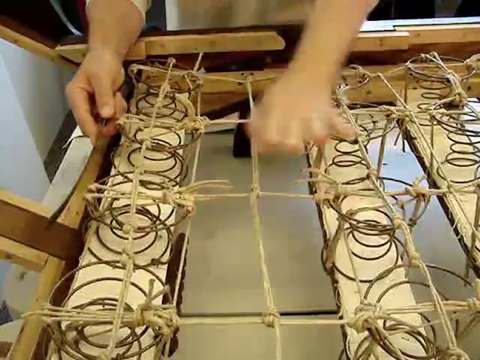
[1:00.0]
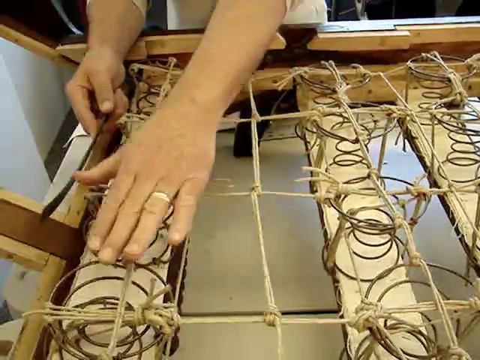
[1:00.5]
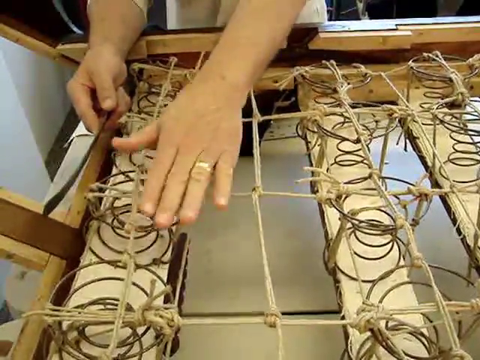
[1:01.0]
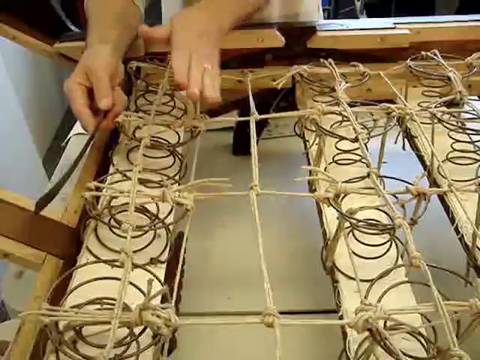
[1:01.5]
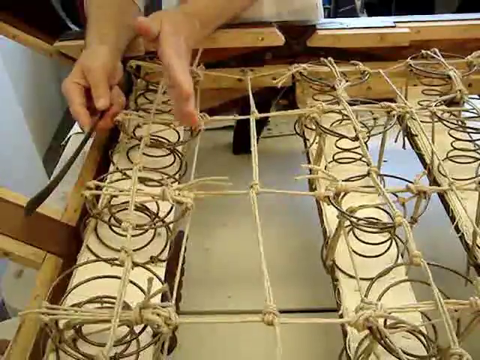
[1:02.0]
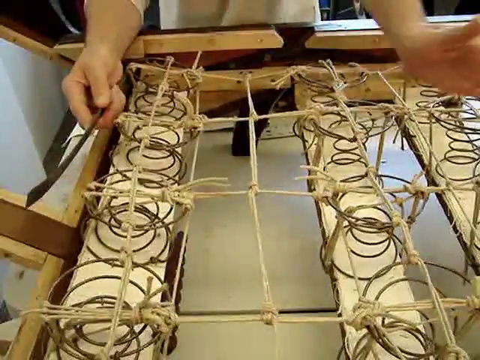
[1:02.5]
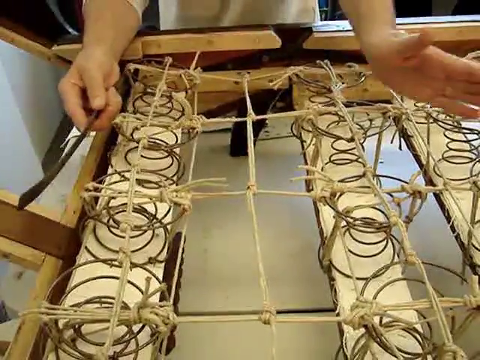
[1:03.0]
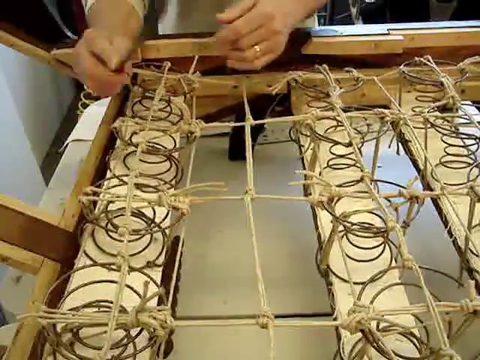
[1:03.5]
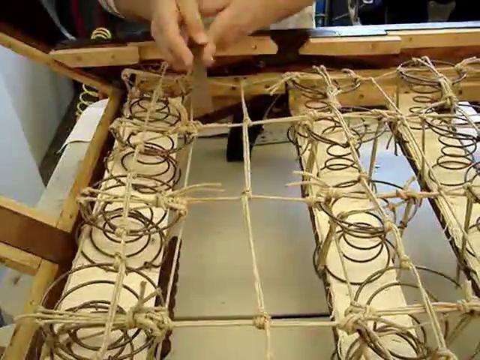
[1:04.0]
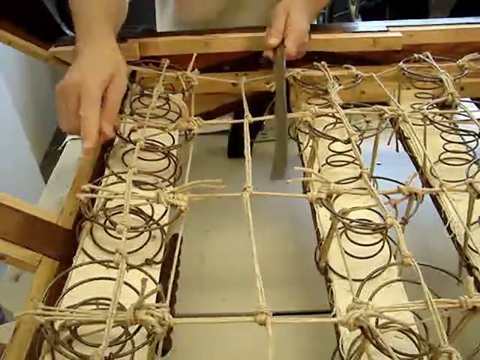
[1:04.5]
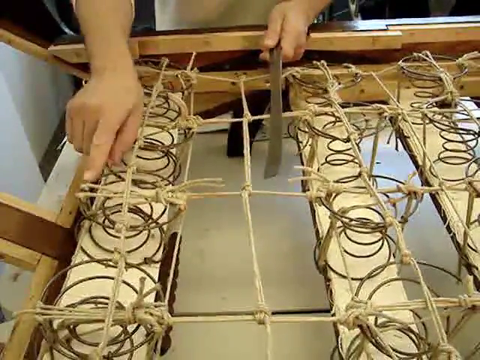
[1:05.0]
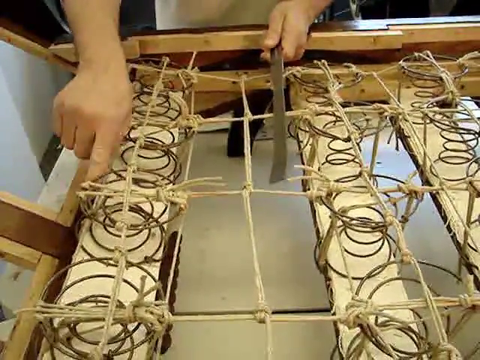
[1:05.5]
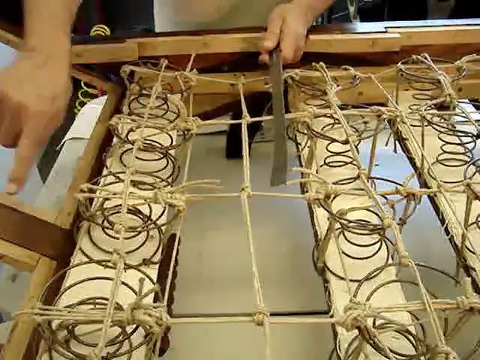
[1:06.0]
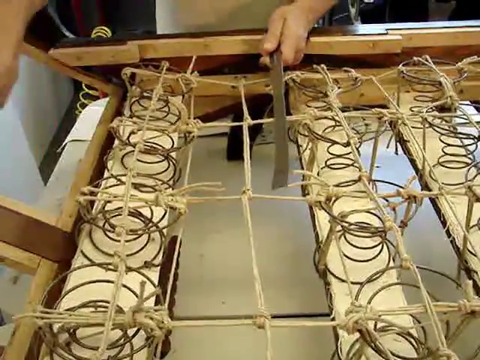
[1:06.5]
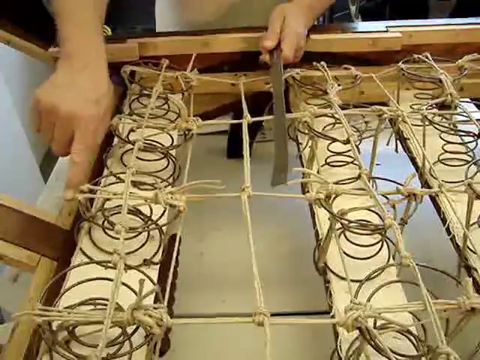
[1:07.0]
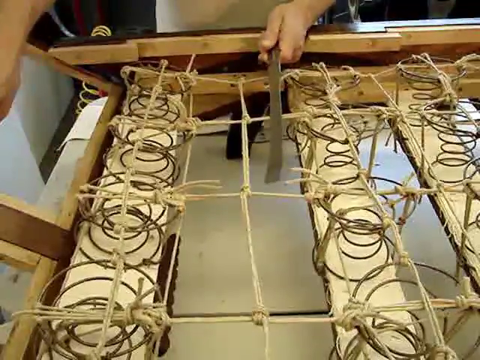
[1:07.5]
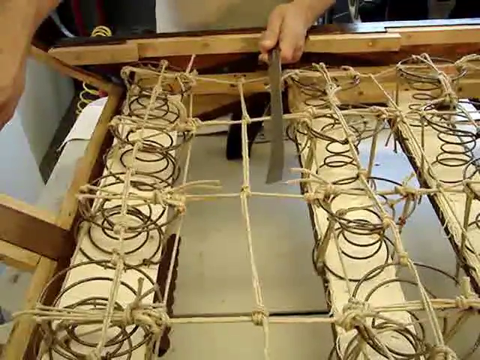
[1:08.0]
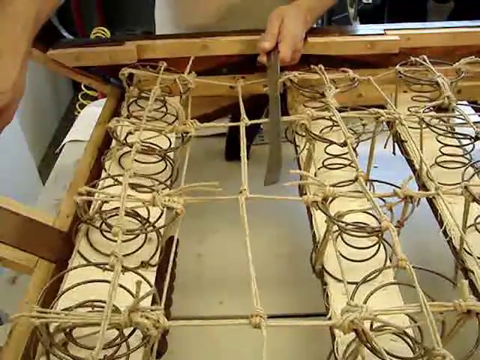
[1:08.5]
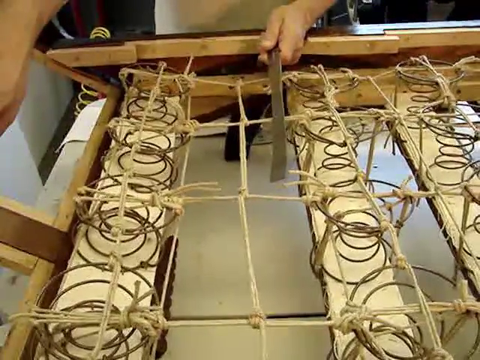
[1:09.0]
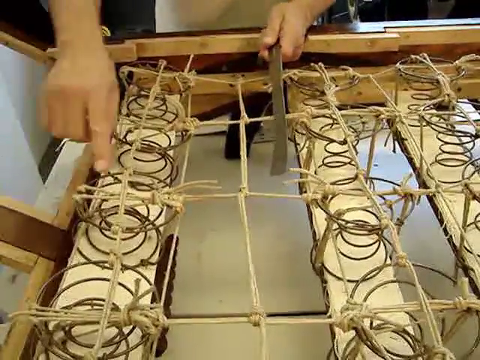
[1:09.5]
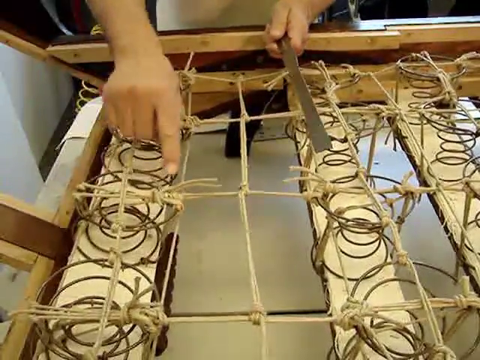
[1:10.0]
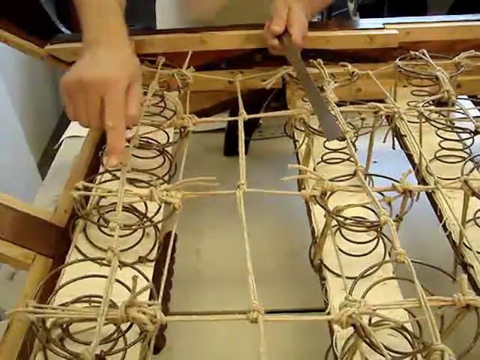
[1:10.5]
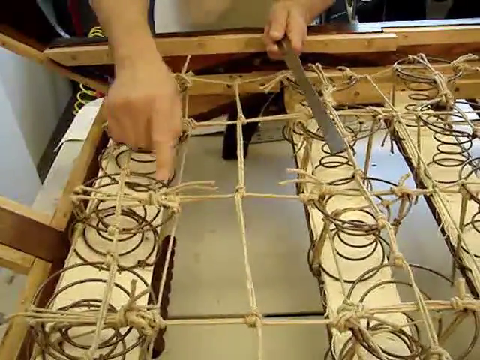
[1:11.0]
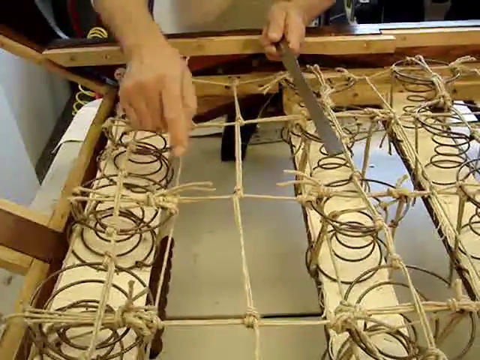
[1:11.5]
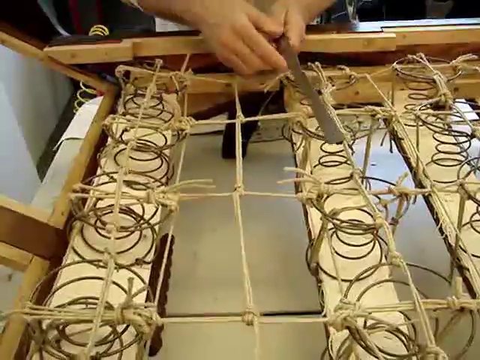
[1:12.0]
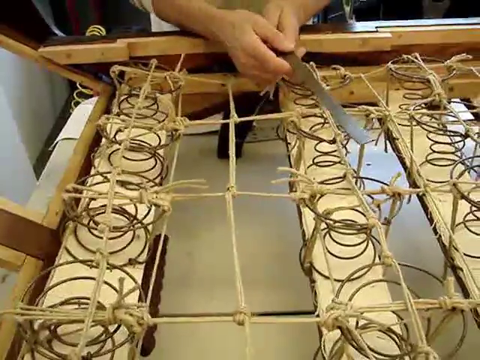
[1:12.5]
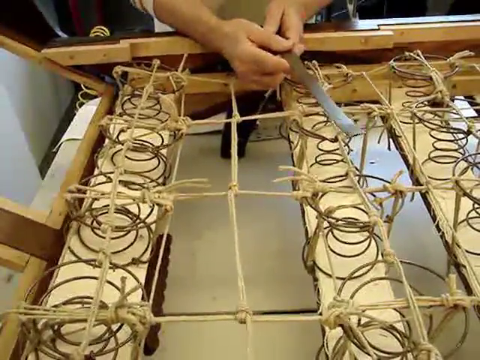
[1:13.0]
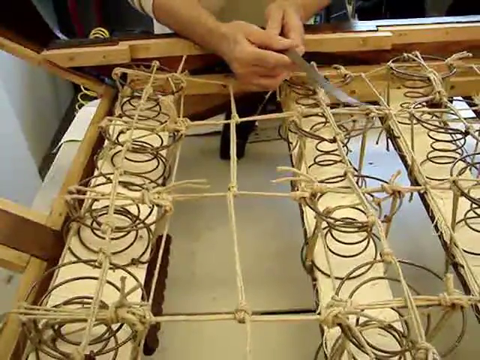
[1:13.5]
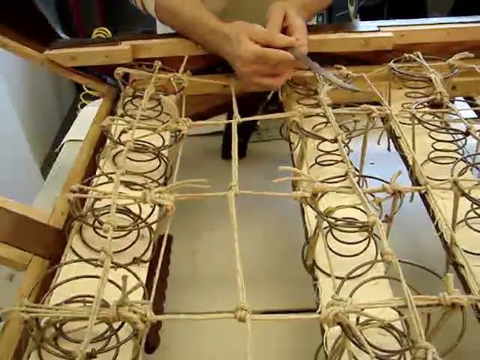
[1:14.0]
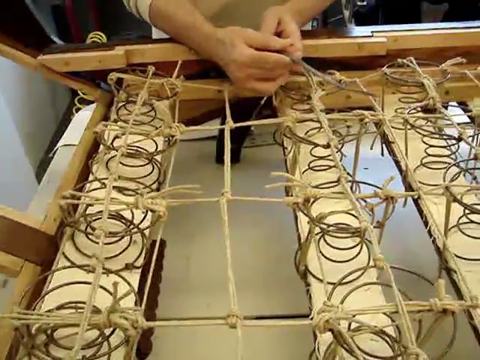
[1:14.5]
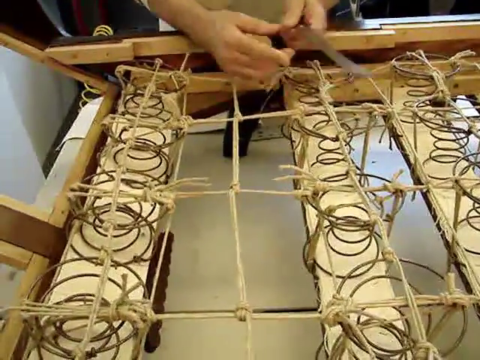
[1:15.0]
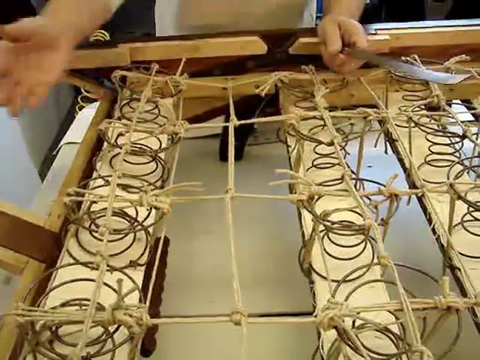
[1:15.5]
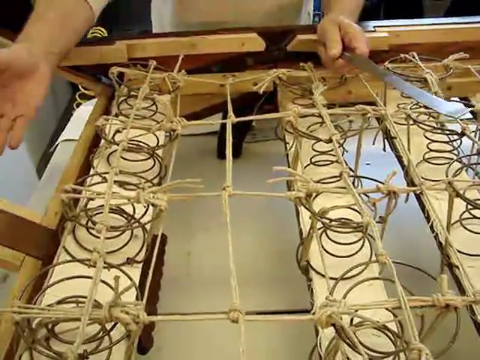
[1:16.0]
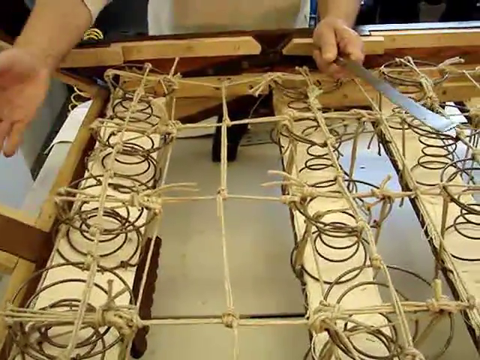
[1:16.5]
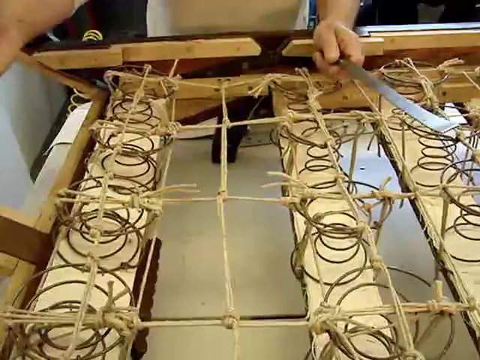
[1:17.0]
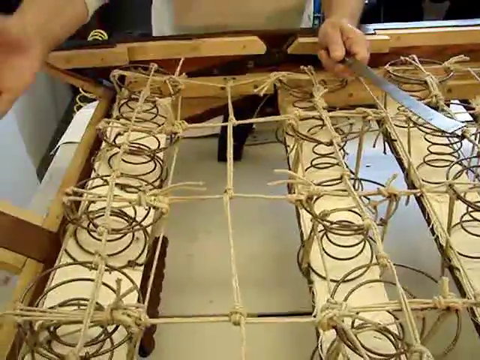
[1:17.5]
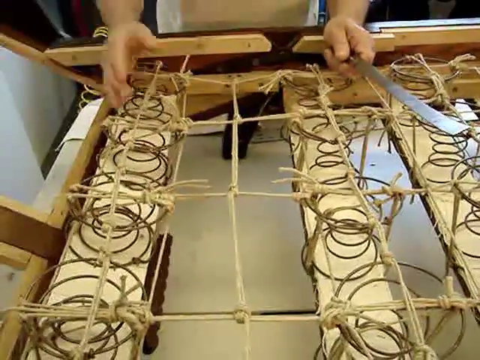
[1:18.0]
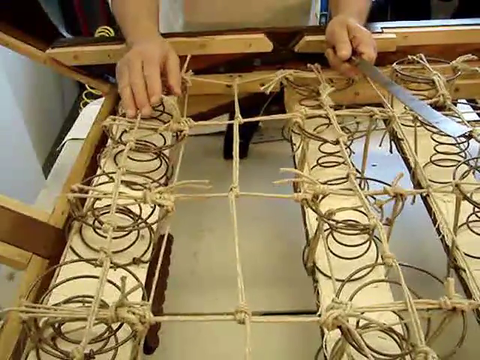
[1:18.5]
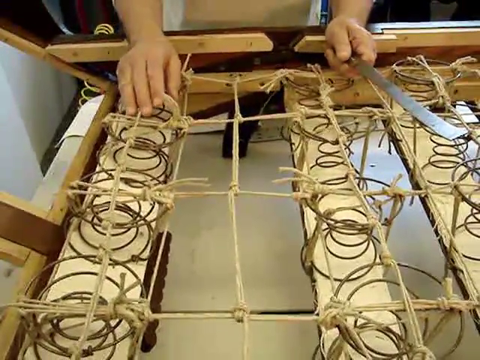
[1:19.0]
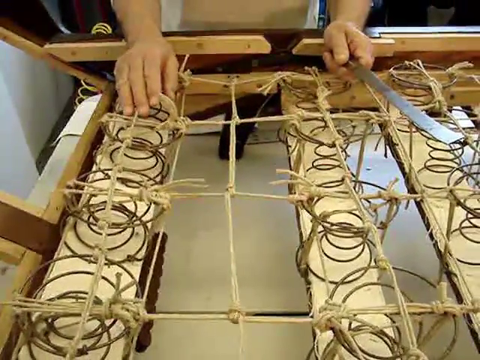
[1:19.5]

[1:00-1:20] A wooden structure is in front in the workshop. The man shows the springs on top and how tight they are, holding on top of the structure. The wood is lying down, with springs on top and something tied on top of those. He demonstrates how strong the springs are.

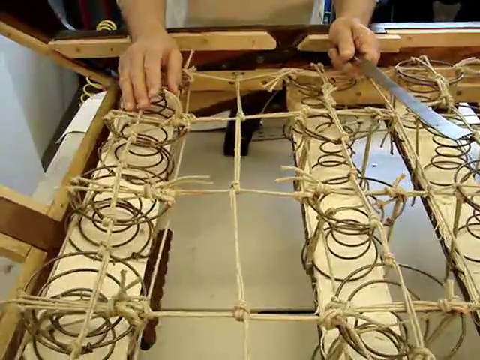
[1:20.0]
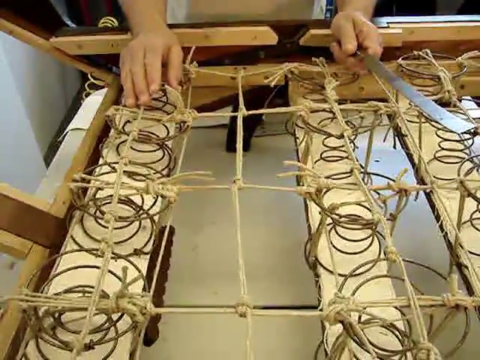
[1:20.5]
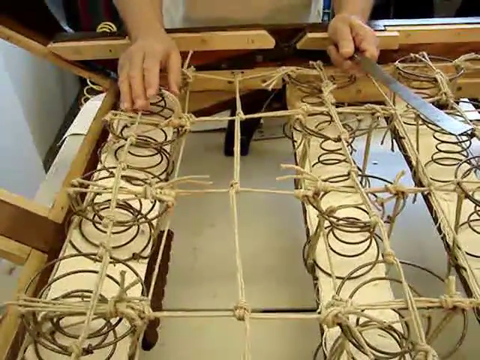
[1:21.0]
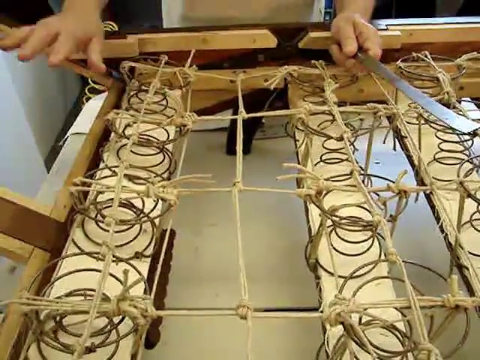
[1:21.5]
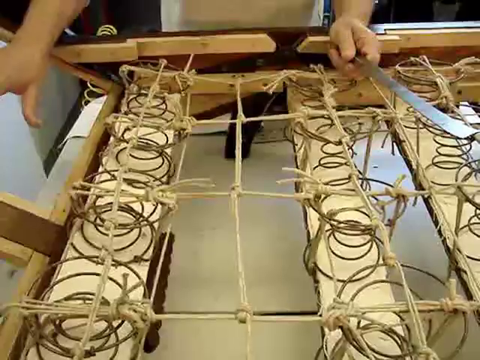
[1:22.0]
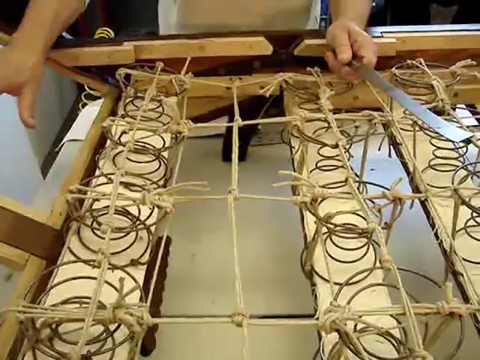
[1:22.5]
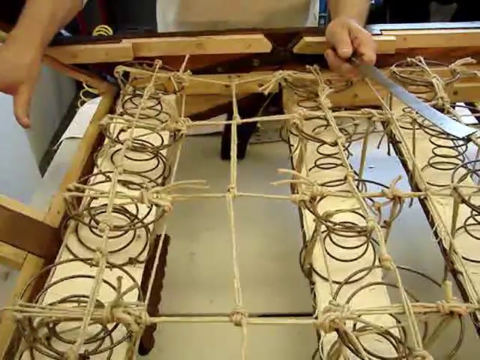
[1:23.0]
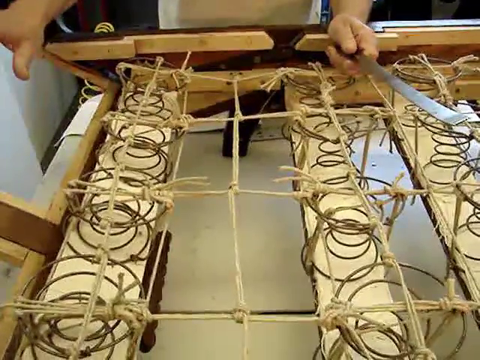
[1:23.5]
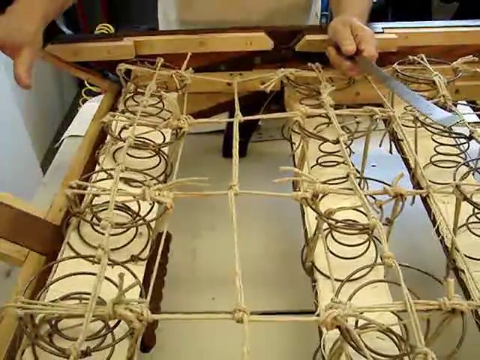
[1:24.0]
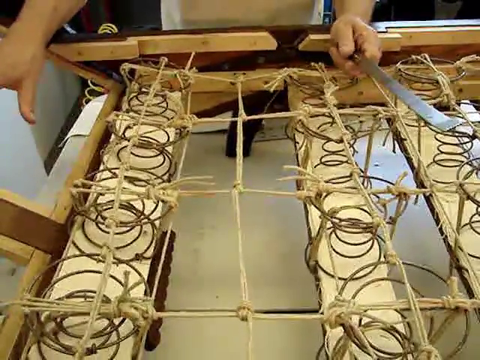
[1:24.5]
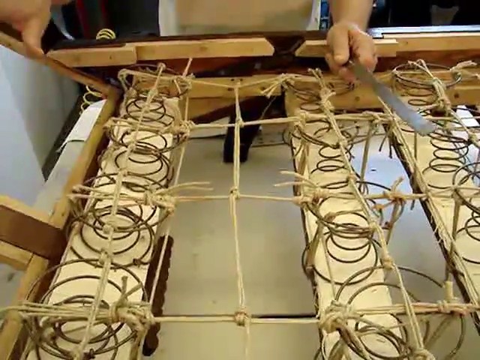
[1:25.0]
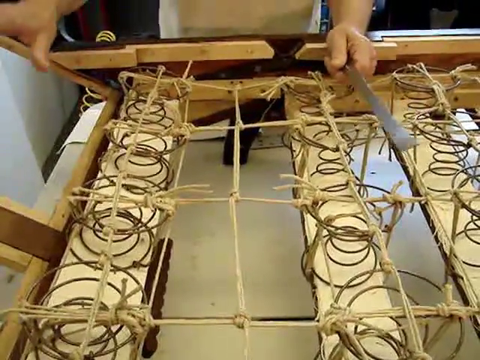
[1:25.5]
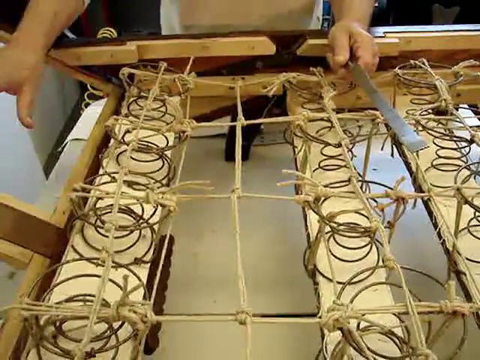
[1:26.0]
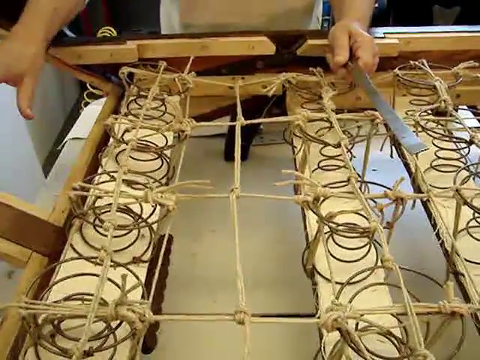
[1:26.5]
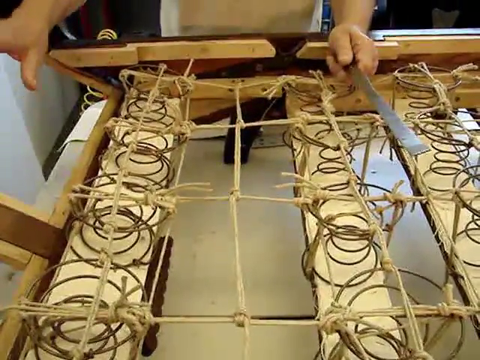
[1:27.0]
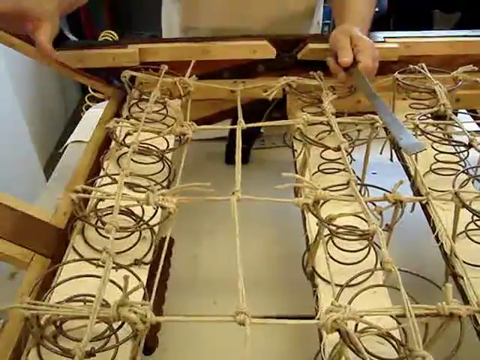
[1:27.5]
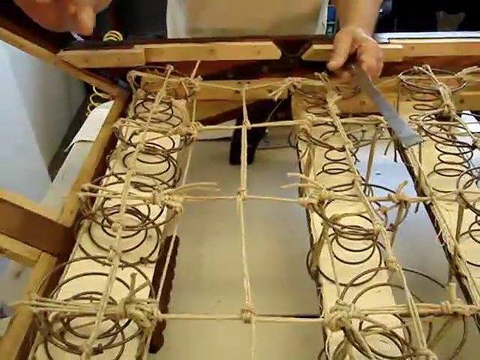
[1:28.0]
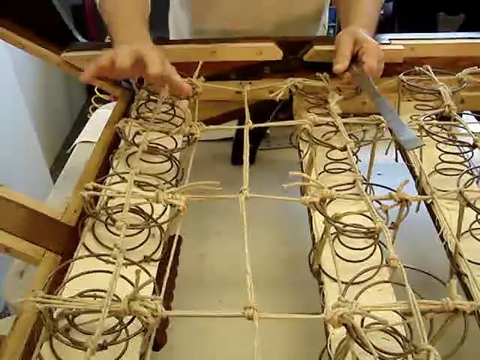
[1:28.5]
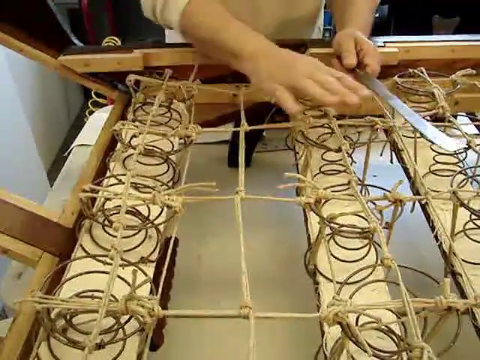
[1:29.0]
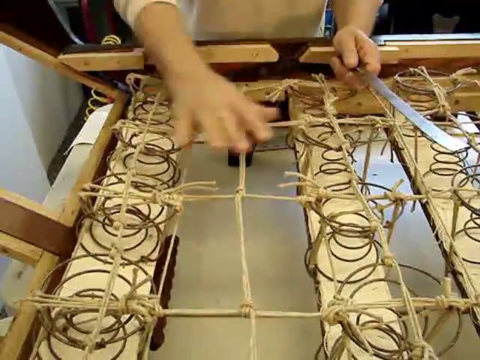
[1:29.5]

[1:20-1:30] The man continues with the wooden structure, which has springs on top and tight ropes tied on top of the springs. The structure seems to be like a base bed. He keeps showing how strong it is by holding something on top of it.